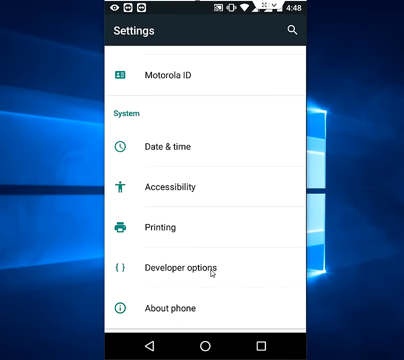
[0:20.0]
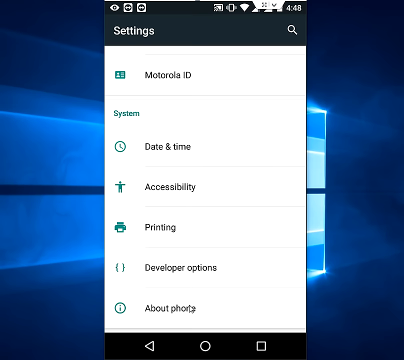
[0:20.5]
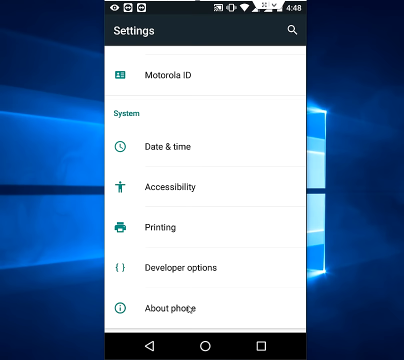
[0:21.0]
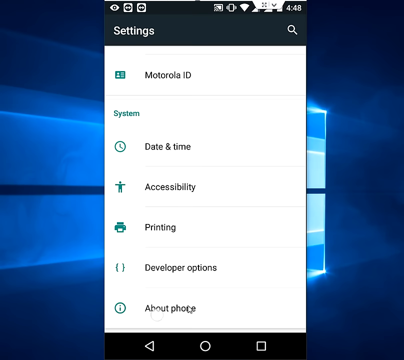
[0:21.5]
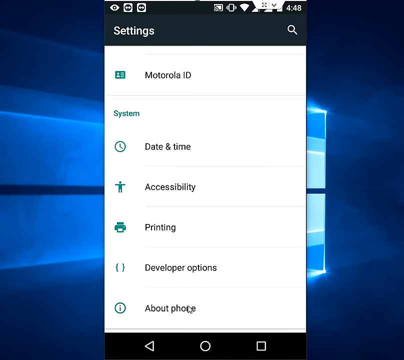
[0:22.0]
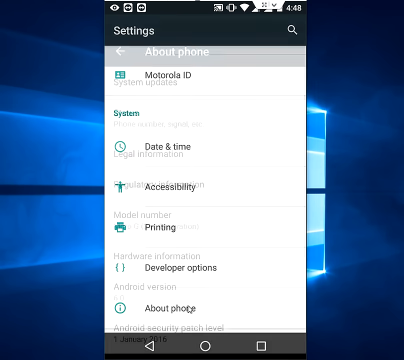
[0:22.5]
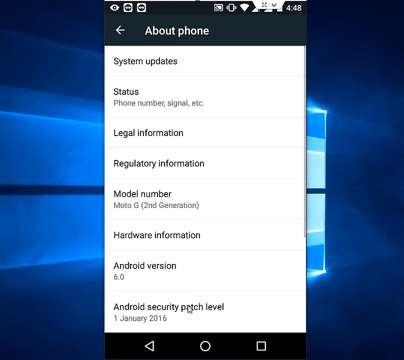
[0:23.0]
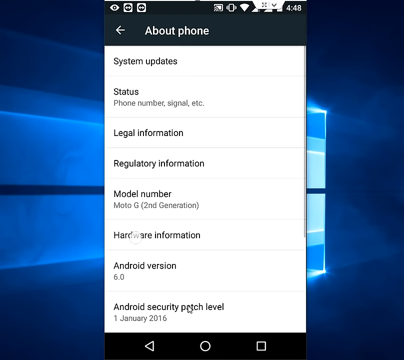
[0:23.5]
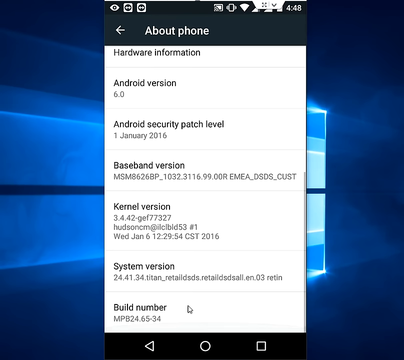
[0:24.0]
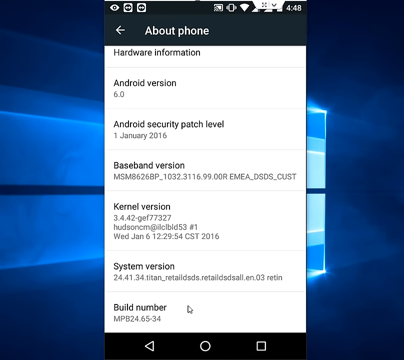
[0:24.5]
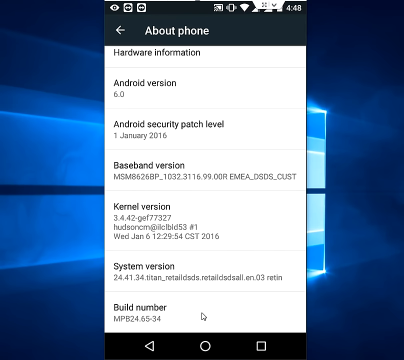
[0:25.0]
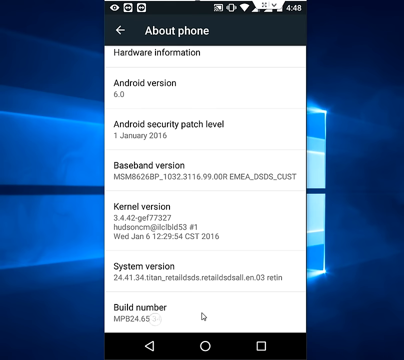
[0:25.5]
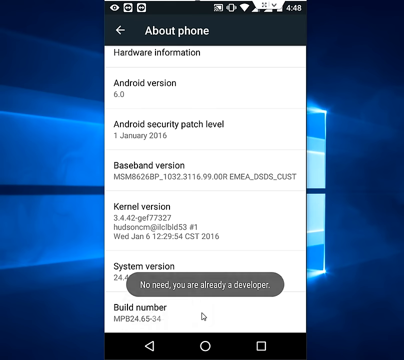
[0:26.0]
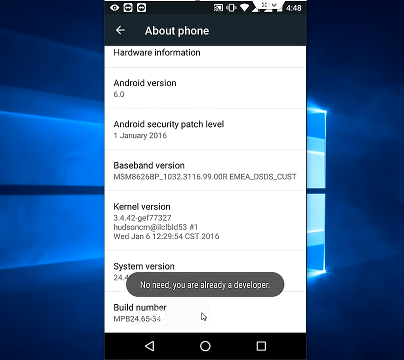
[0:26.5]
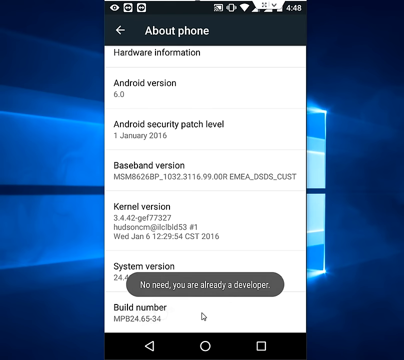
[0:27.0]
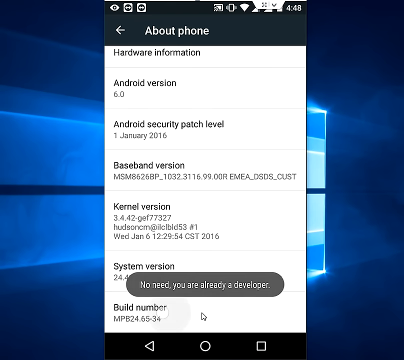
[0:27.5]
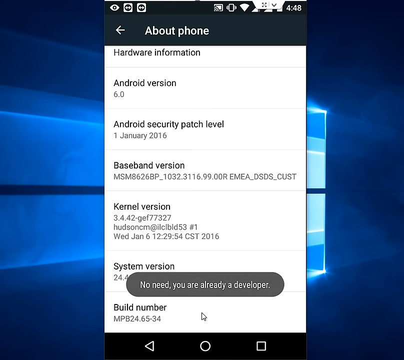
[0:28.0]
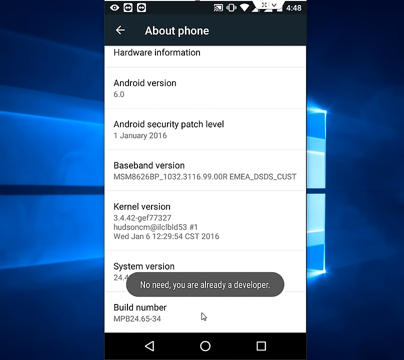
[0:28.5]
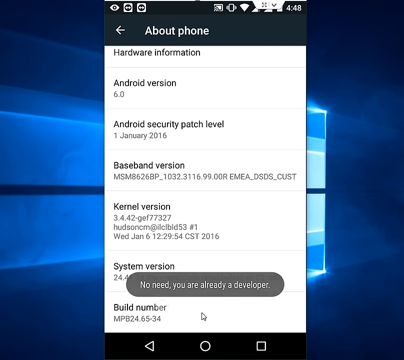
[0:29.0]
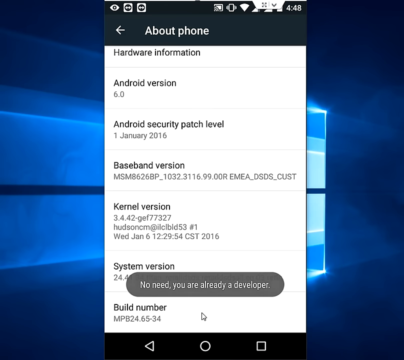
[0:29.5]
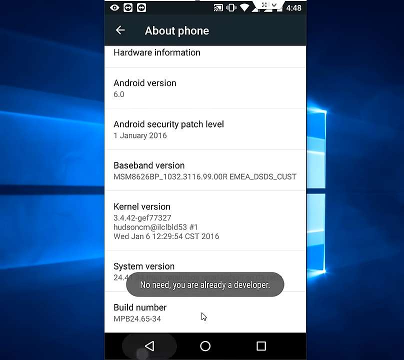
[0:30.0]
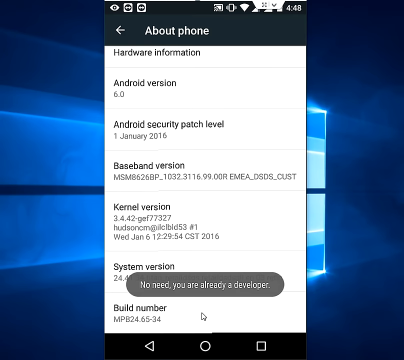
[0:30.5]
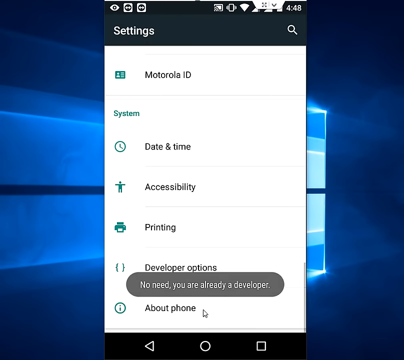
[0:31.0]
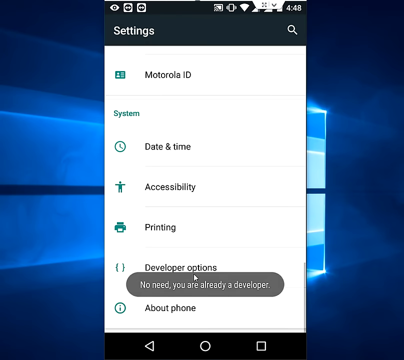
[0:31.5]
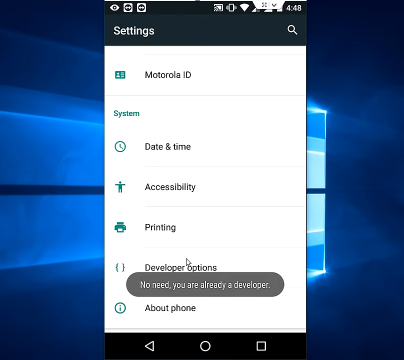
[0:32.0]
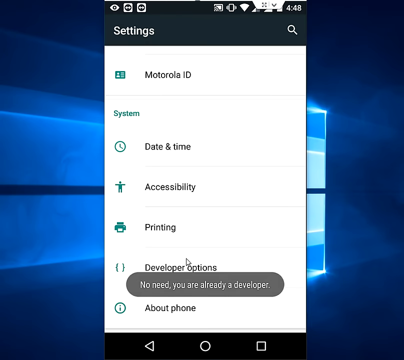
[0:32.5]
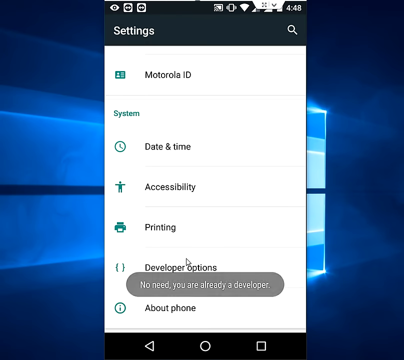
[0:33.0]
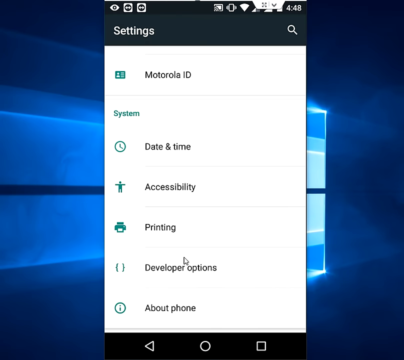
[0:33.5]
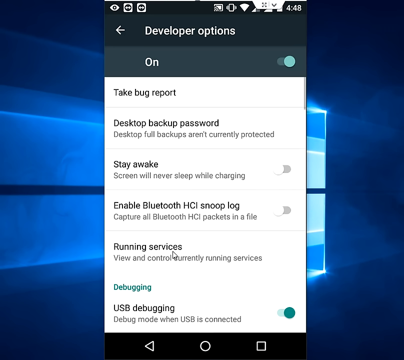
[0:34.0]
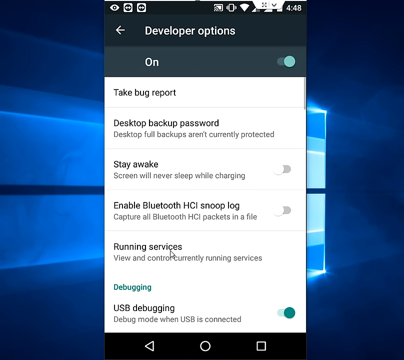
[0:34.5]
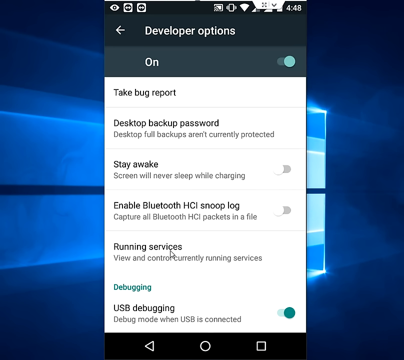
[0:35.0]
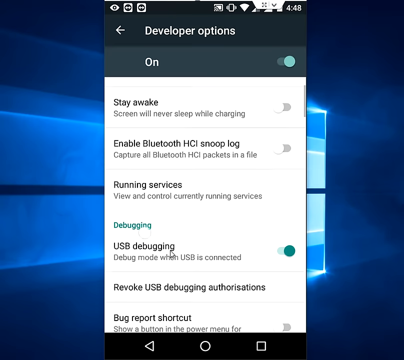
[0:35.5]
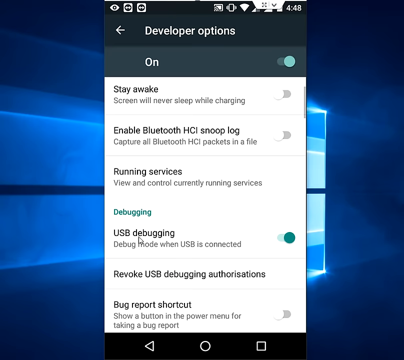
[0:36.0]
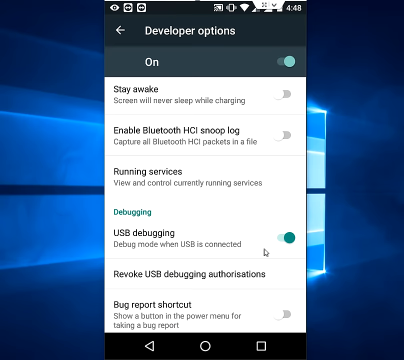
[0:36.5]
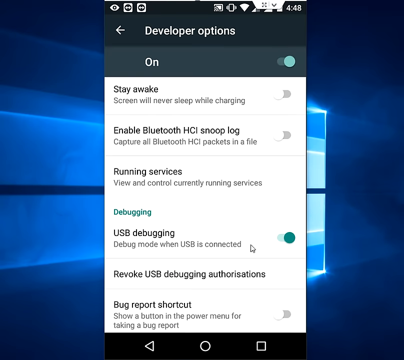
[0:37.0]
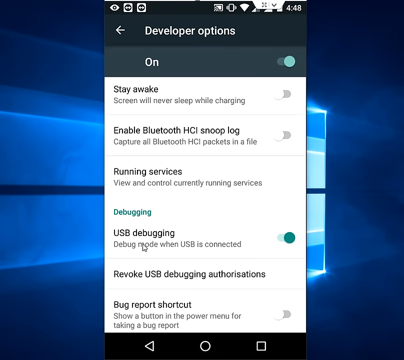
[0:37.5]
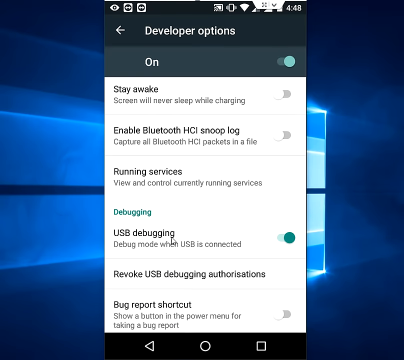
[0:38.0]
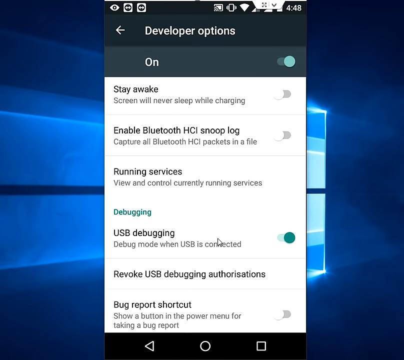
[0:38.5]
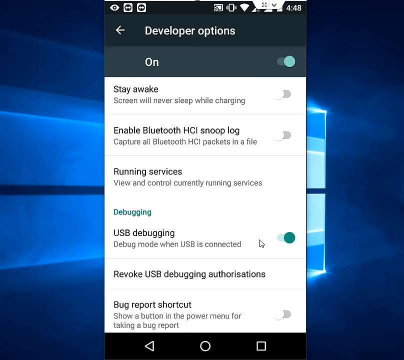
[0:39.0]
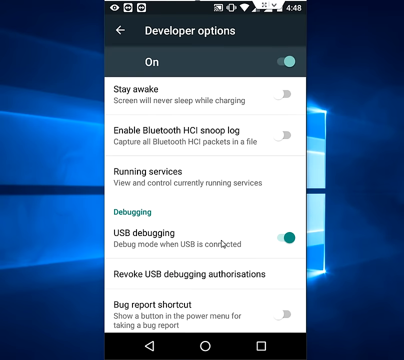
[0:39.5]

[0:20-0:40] Different options in the phone's settings are displayed on the screen, each with a teal pictorial logo and black text to its right naming what the logo refers to. At the top is Motorola ID. Further down the page, under system, are date and time, accessibility, printing, developer options, and about phone. As the screen scrolls, the about phone section shows system updates, status, legal information, regulatory information, model number, hardware information, Android version and Android security patch level. Next, hardware information, Android version, Android security patch level, baseband version, kernel version, system version and build number scroll onto the screen. The Android version is 6.0, the Android security patch level was last updated on January 1st, 2016, and the baseband version is listed.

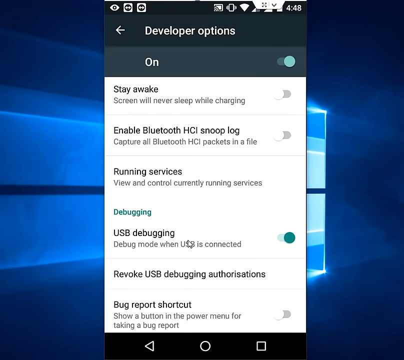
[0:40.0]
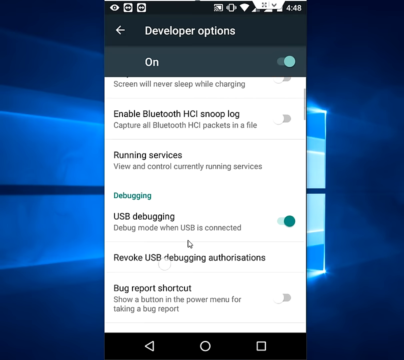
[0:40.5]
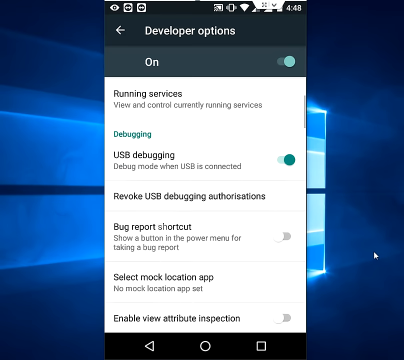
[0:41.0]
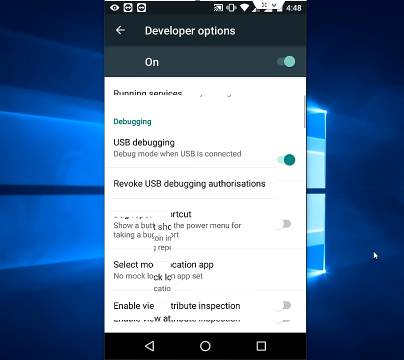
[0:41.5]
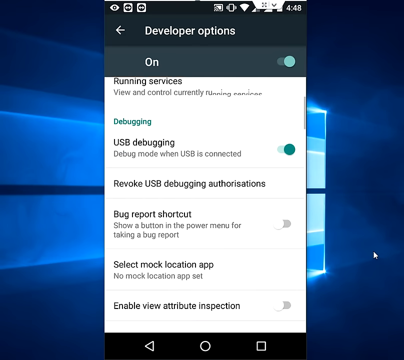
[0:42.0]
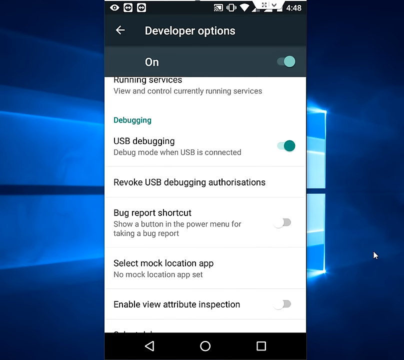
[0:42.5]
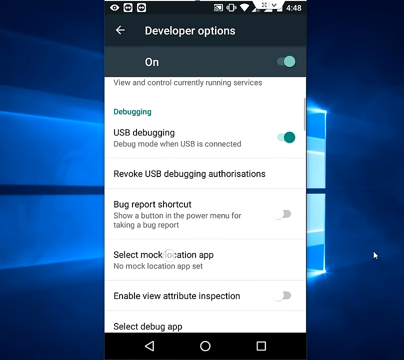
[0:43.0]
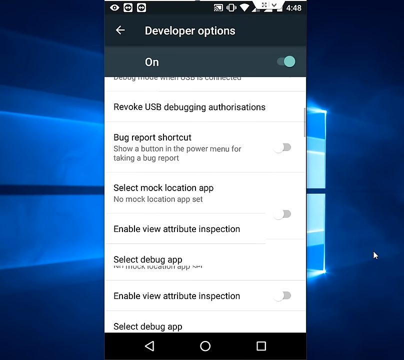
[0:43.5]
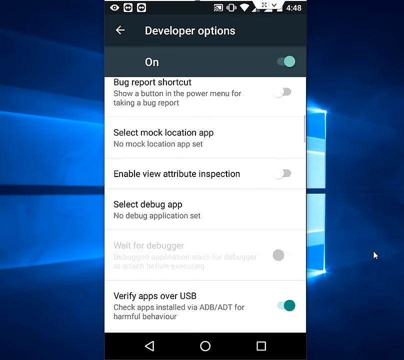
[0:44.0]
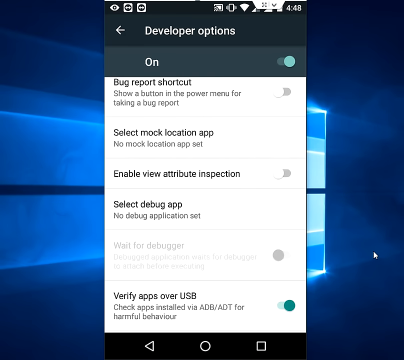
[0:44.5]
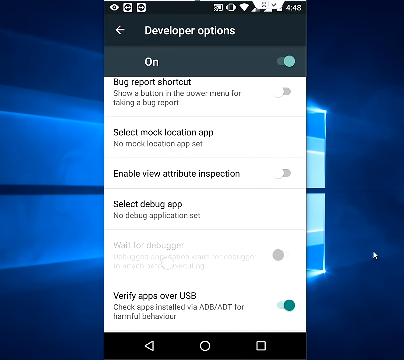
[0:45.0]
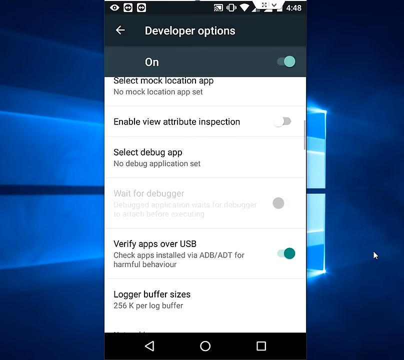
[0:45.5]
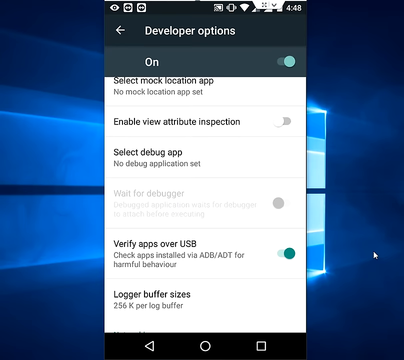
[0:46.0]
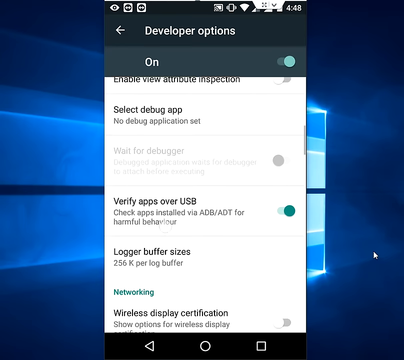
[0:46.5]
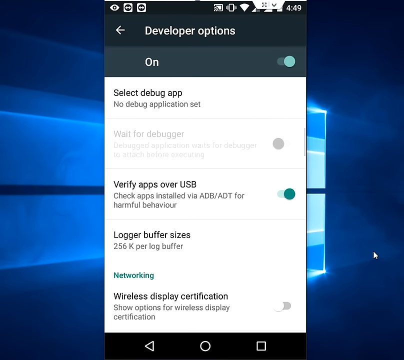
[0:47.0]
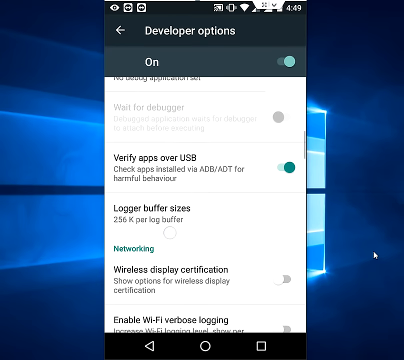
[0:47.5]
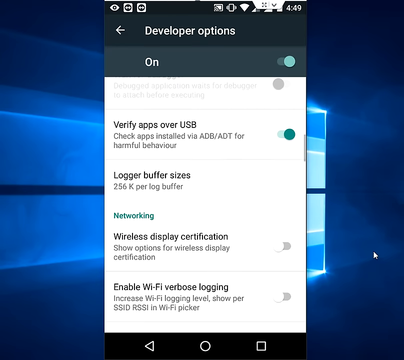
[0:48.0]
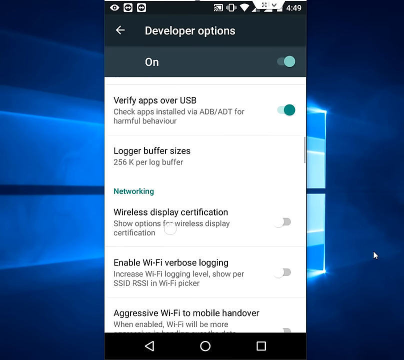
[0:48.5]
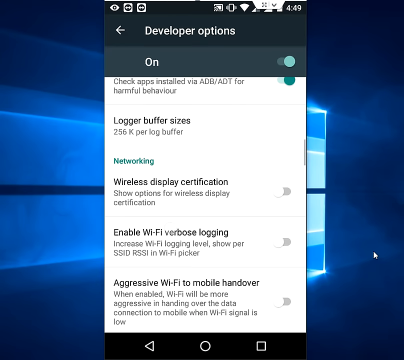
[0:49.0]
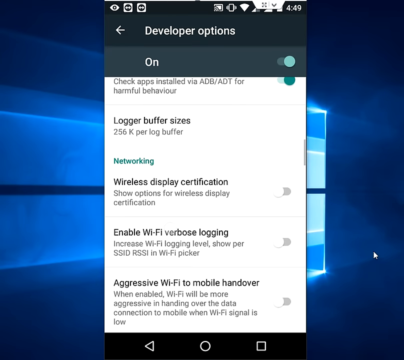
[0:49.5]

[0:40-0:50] Developer options are open on the phone, with selections that can be turned on or off: stay awake, enable Bluetooth HCI log, and running services. There is also a debugging section with USB debugging, revoke USB debugging authorizations, and bug report shortcut. The view then moves to running services and scrolls up the screen, showing a few more options such as select mock location app and enable view attribute inspection. USB debugging, debug mode when USB is connected, is switched on, shown by a teal dot moved to the right and in color. The bug report shortcut is toggled off, its round symbol white and grayed out. Select mock location app and enable view attribute inspection are toggled to the left, white and grayed out. Moving down the screen, verify apps over USB is toggled to the right and is teal. More options toggled to the left and grayed out are the networking options: wireless display certification, enable Wi-Fi verbose logging, and aggressive Wi-Fi to mobile handover.